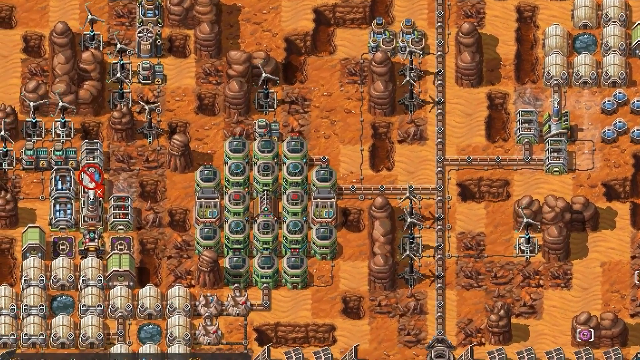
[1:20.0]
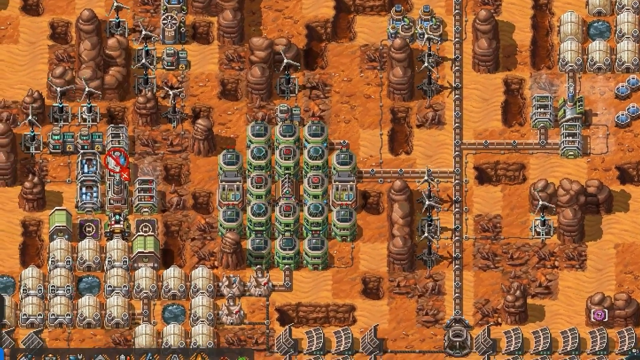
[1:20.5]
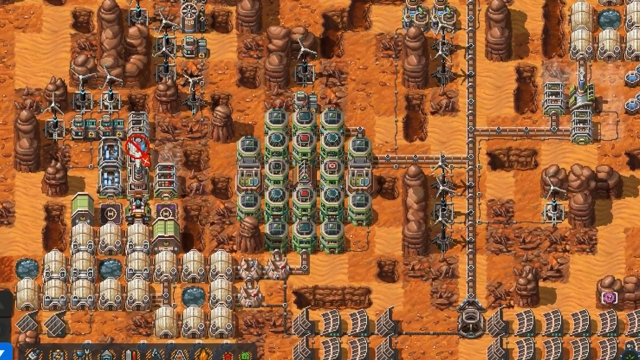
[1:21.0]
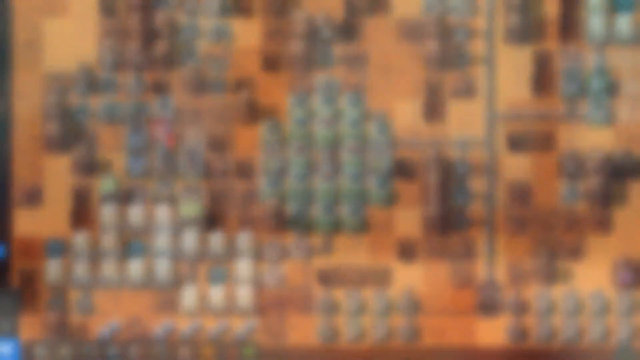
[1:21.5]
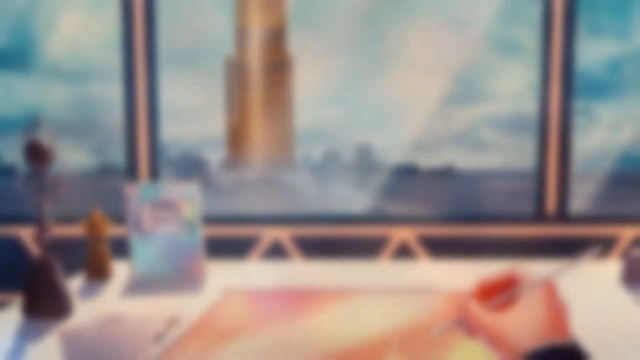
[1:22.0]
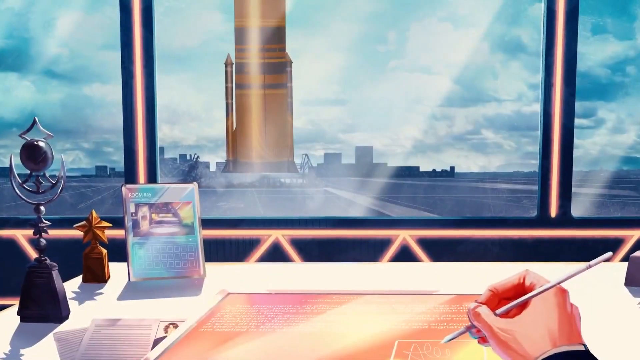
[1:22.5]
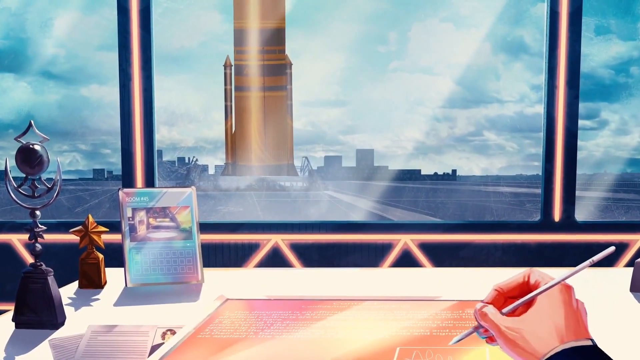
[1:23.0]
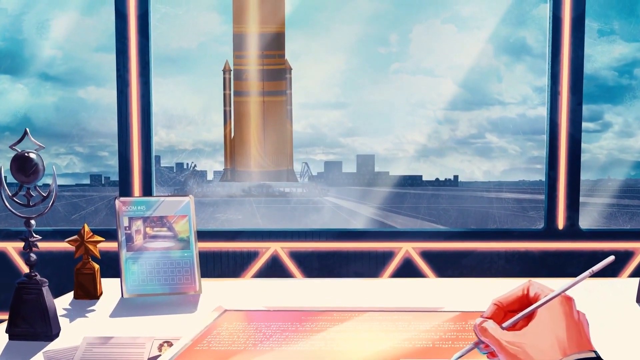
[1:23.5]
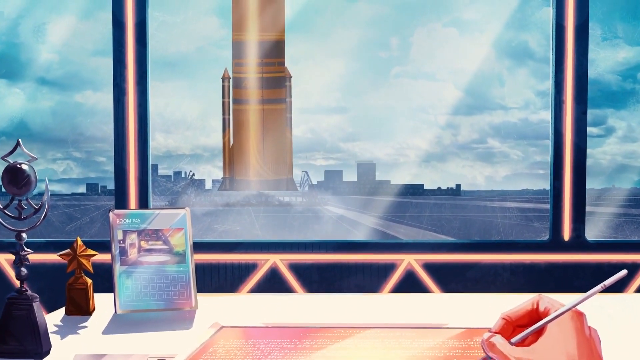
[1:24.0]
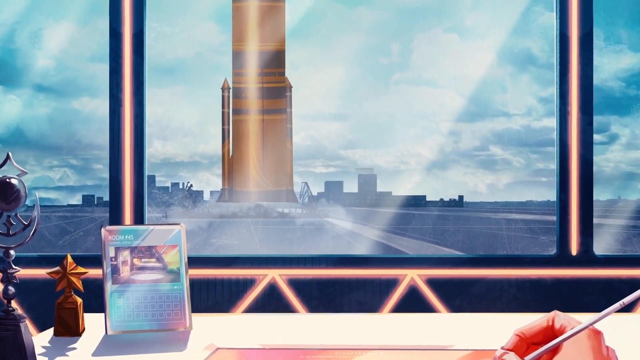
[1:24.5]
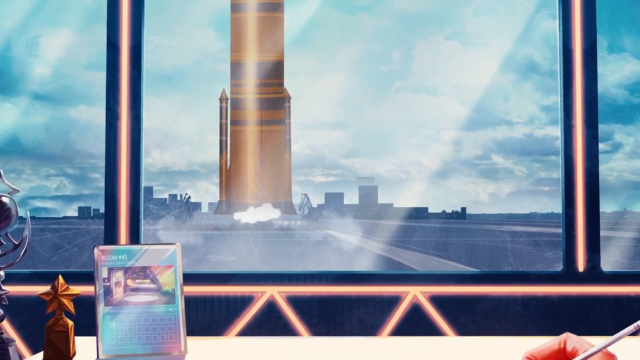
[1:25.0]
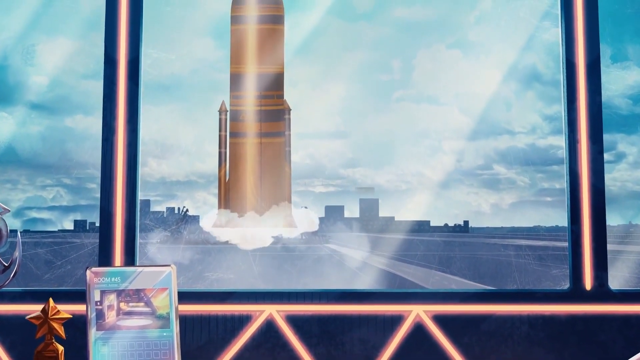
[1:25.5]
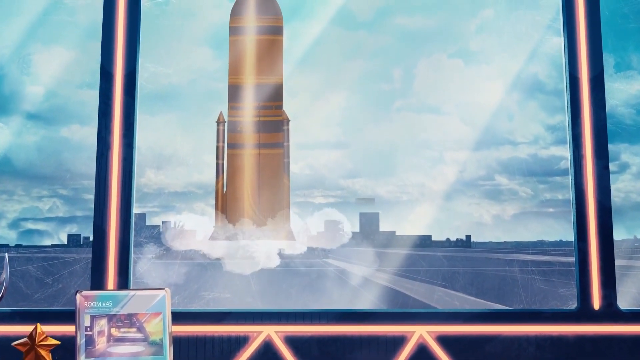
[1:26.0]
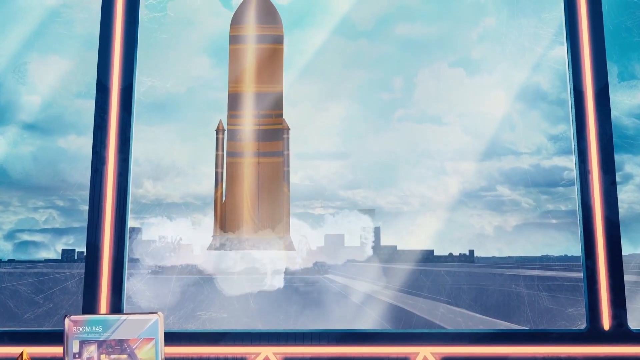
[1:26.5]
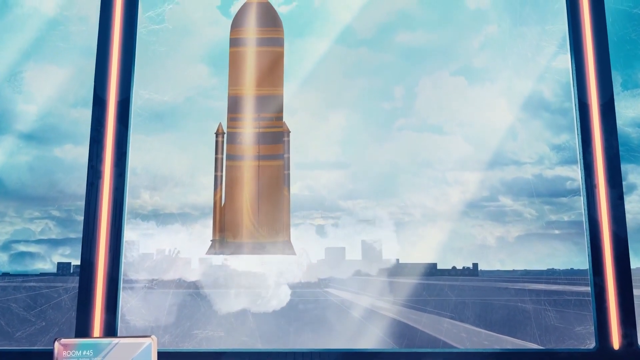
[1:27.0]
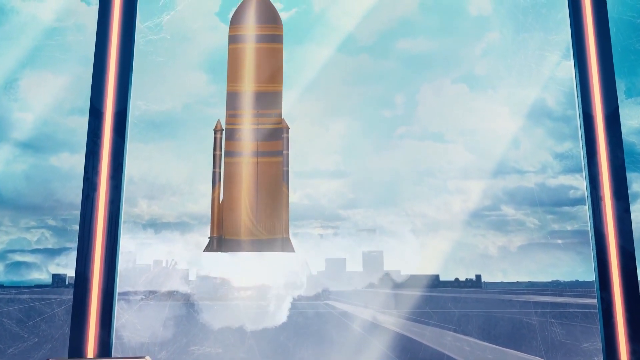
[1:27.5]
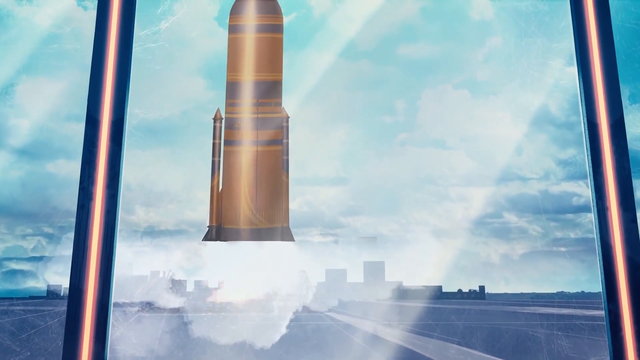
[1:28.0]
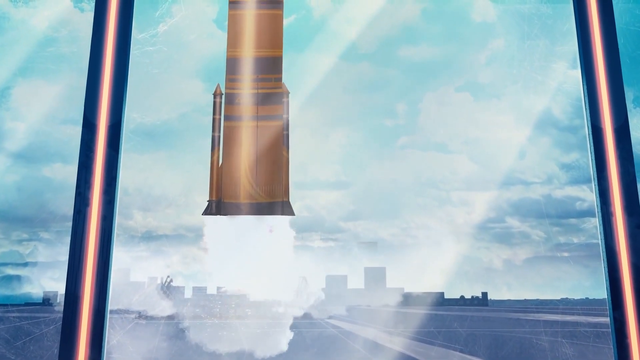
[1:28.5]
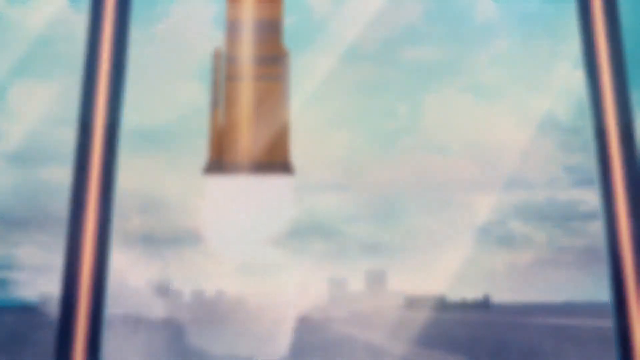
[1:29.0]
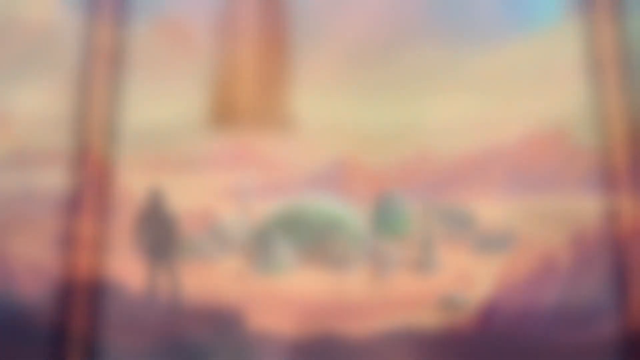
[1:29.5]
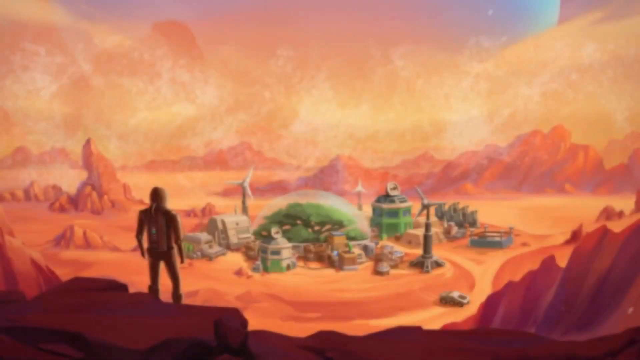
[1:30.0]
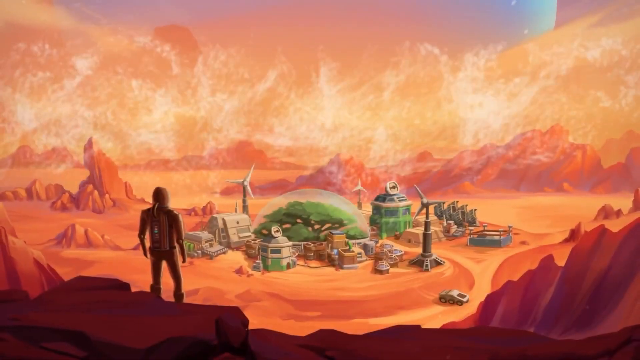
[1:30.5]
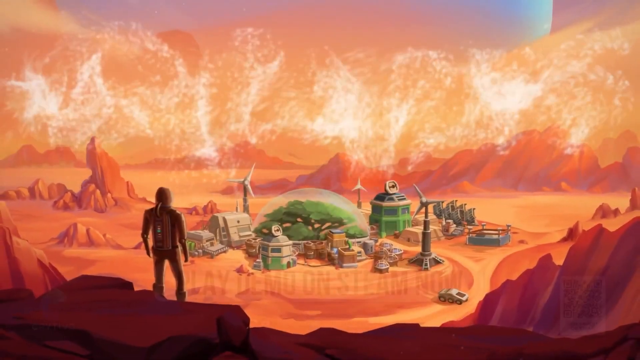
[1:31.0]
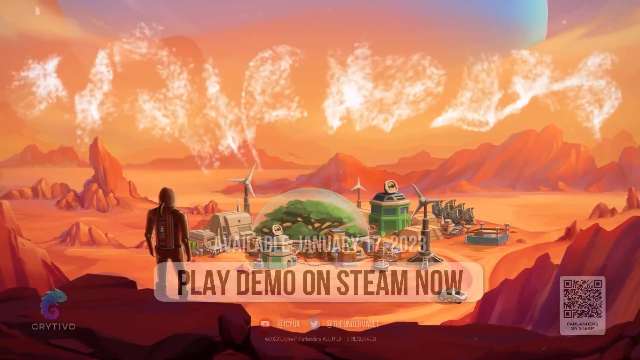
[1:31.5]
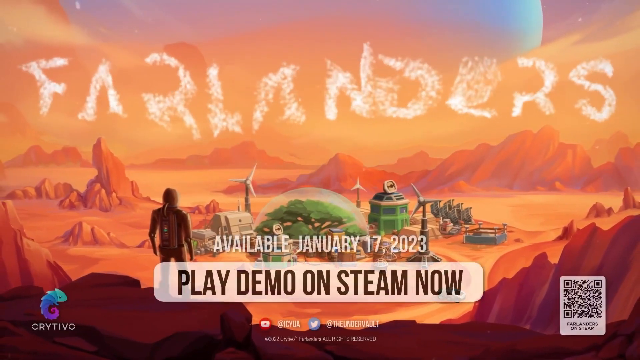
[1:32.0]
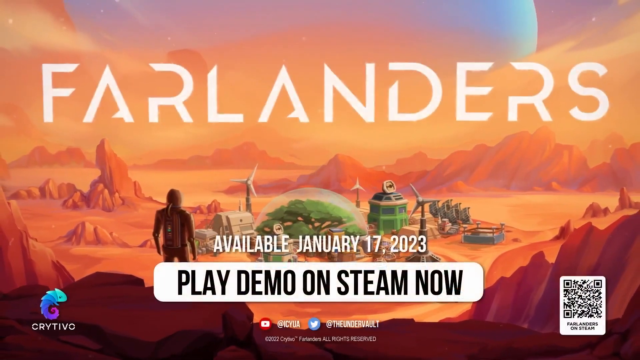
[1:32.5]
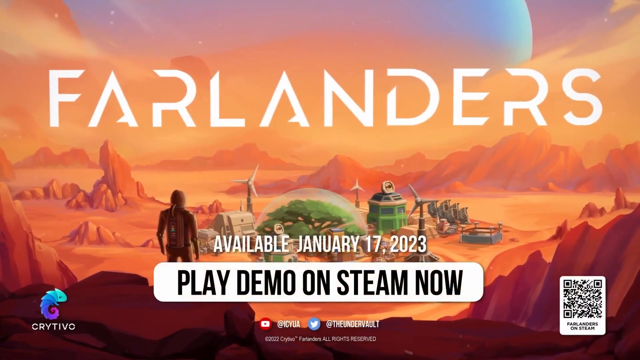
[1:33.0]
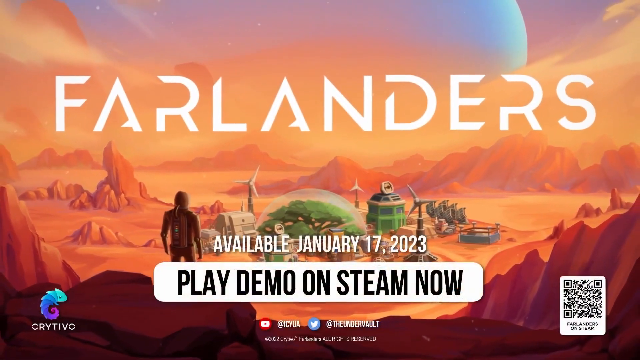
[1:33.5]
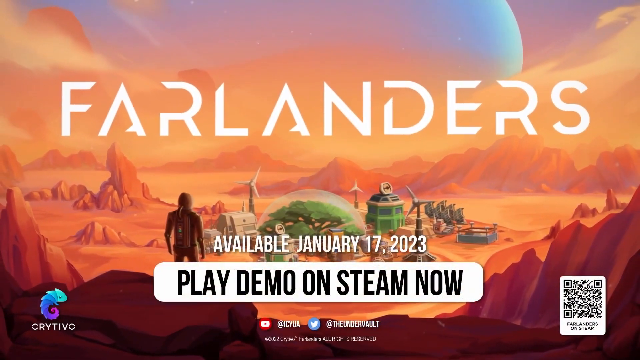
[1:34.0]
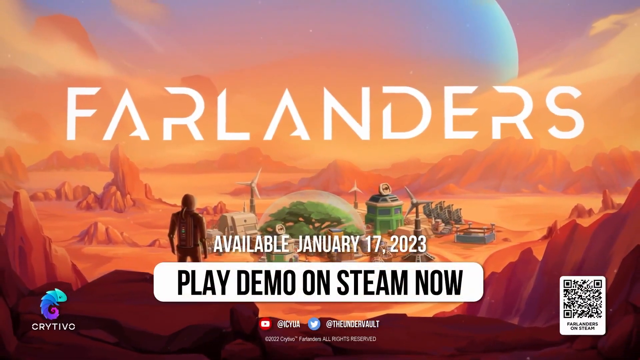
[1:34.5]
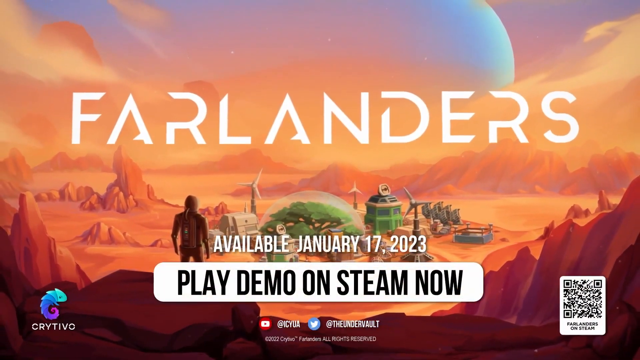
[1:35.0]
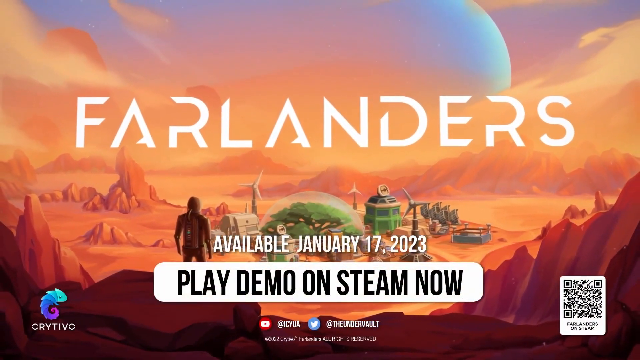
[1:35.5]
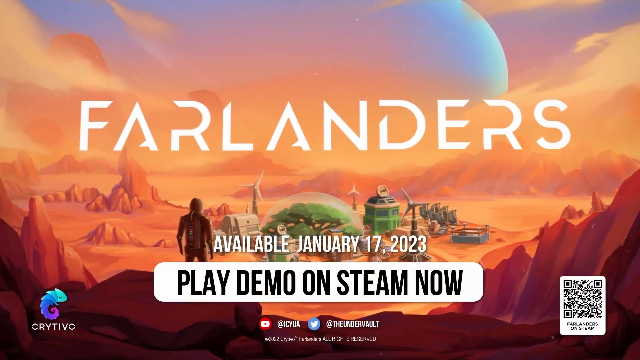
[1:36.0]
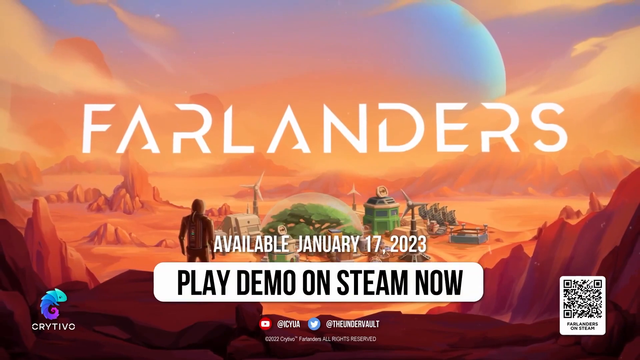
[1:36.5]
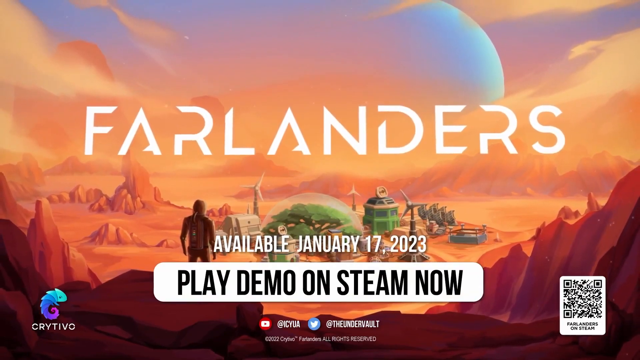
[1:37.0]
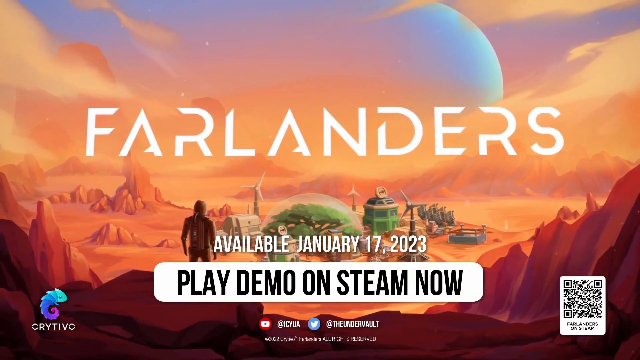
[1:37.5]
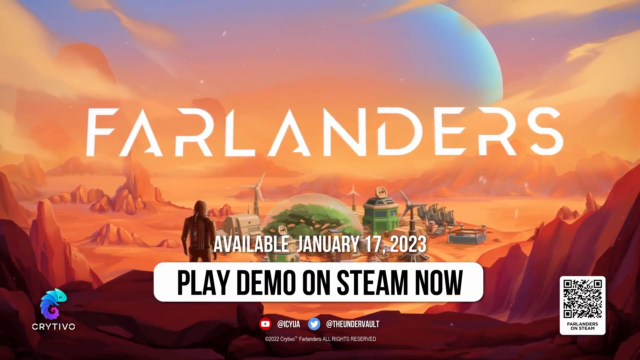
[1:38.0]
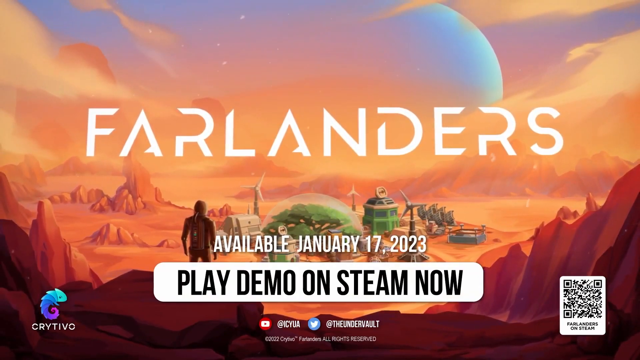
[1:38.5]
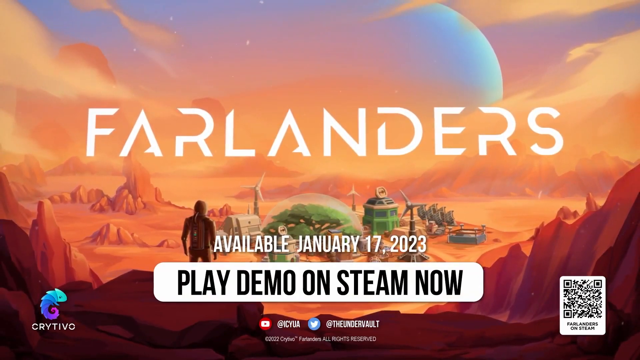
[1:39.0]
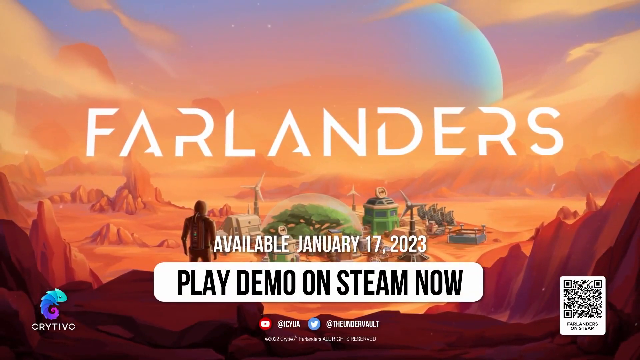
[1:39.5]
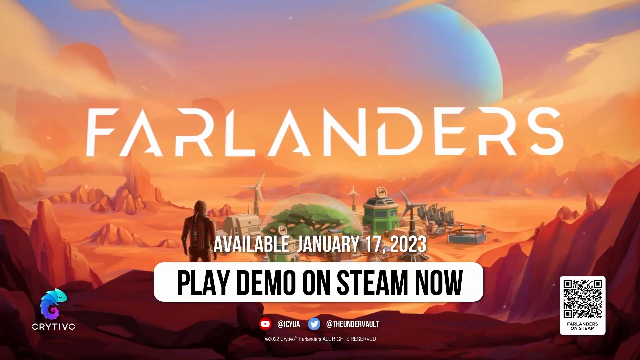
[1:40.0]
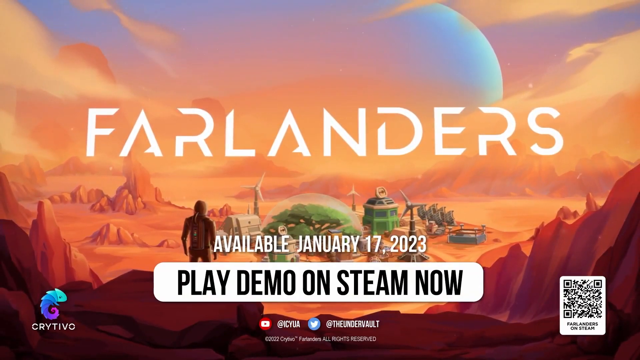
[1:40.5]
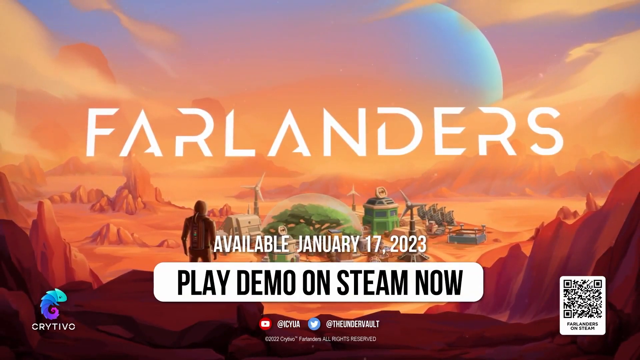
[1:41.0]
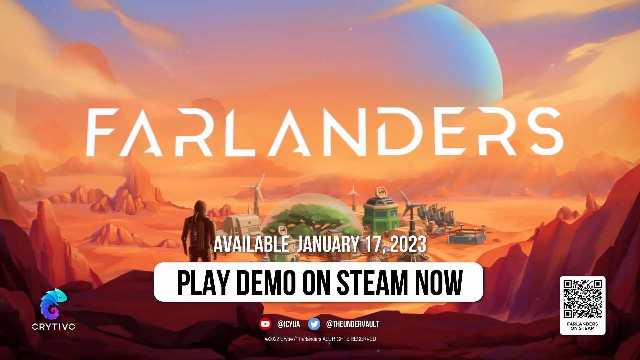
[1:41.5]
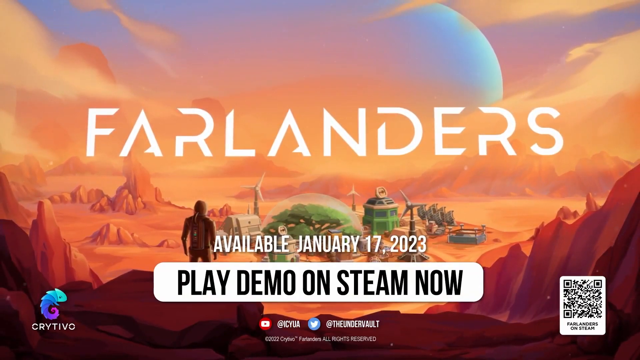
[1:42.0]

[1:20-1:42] The city is now significantly further built. A small cutscene then shows what is apparently a rocket outside a window, and on a person's desk something that looks somewhat like a framed trading card, a statue of a gold or bronze star, and another statue that looks like a star, a planet and a crescent moon. The person in the cutscene is writing something on paper. The rocket is then shown lifting off into space through the clear blue sky. The scene fades to a person in a space suit overlooking a colony-type place on a different planet, then fades into a title that reads "Farlanders available january 17th 2023 play the demo on Steam now", with a logo in the bottom left, a QR code in the bottom right, and social media for Twitter and YouTube. Behind the logo is a blue planet, somewhat obscured by clouds but still clearly visible.